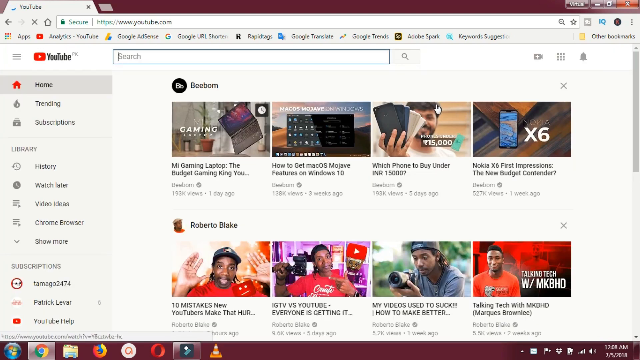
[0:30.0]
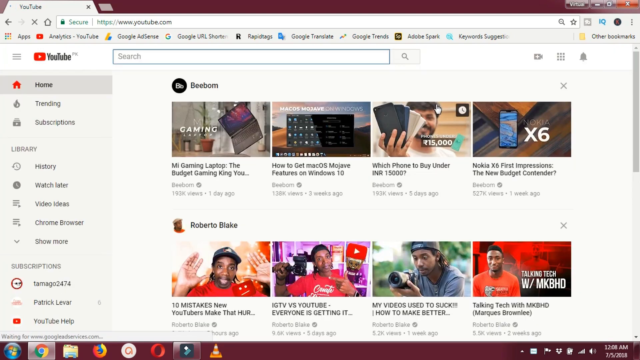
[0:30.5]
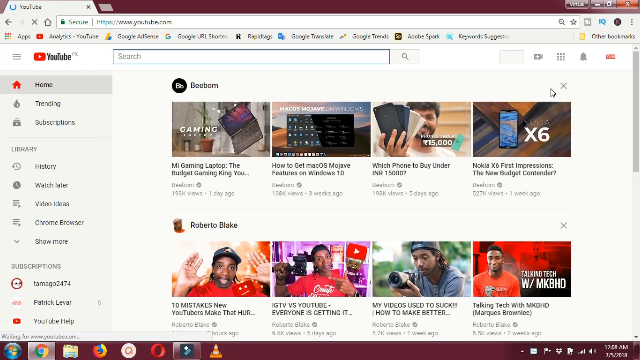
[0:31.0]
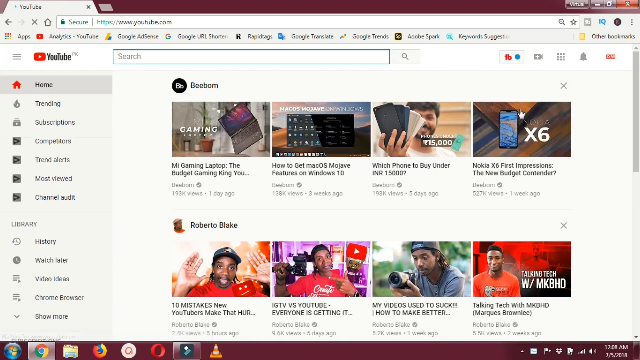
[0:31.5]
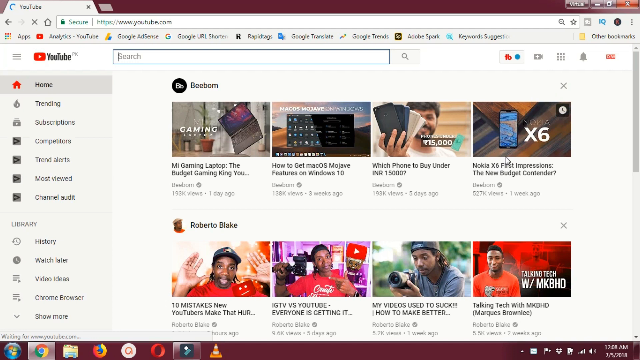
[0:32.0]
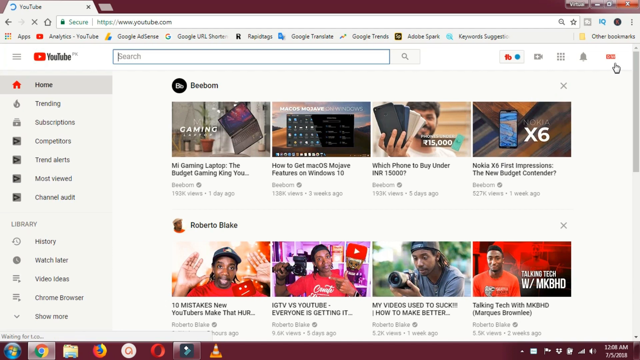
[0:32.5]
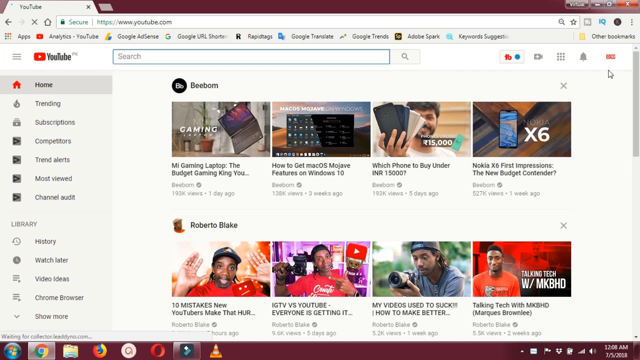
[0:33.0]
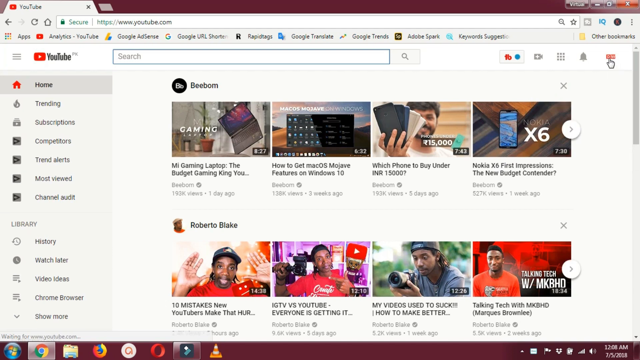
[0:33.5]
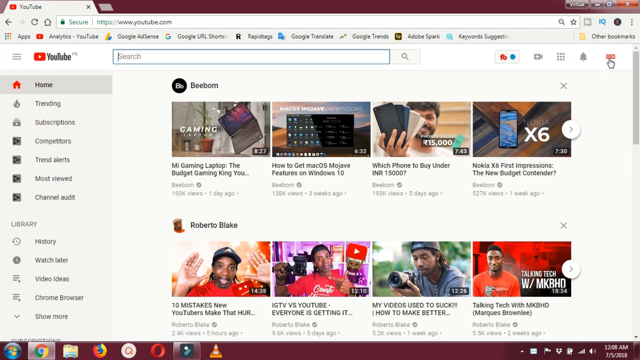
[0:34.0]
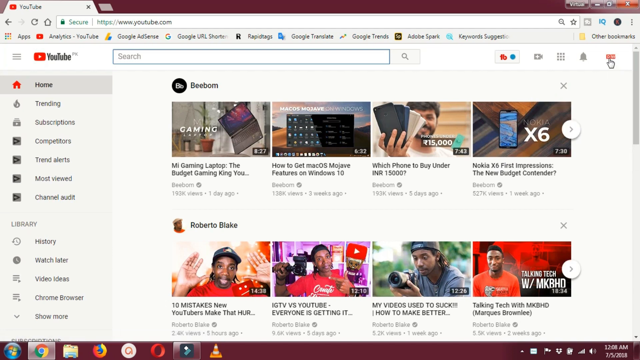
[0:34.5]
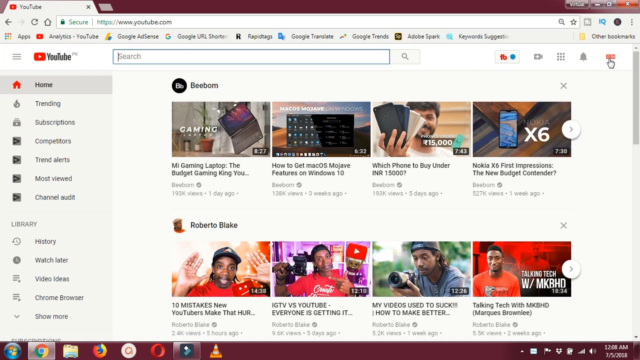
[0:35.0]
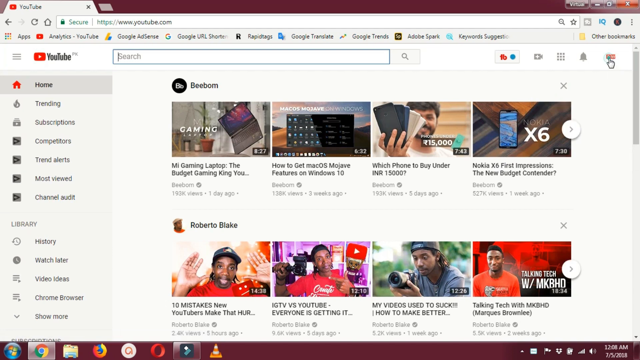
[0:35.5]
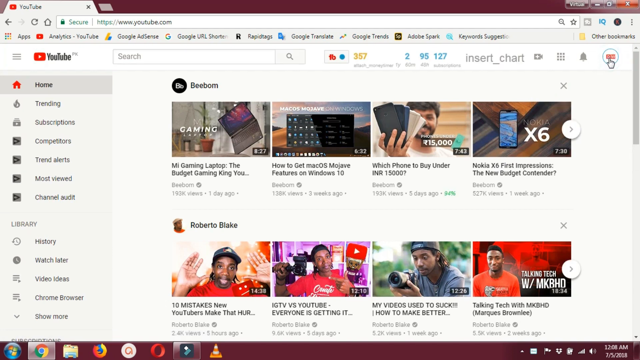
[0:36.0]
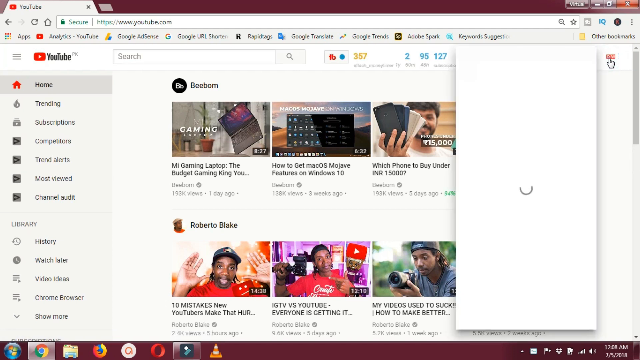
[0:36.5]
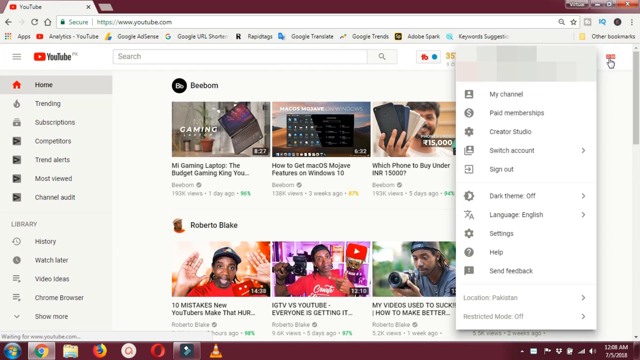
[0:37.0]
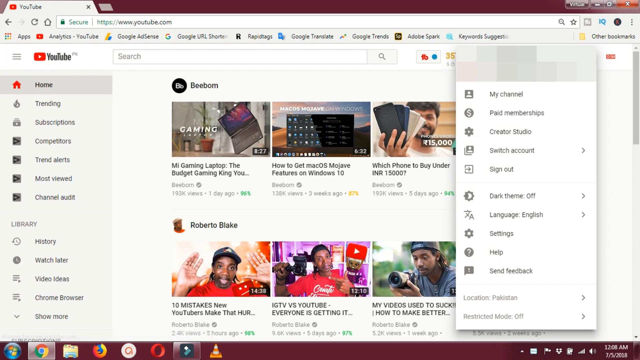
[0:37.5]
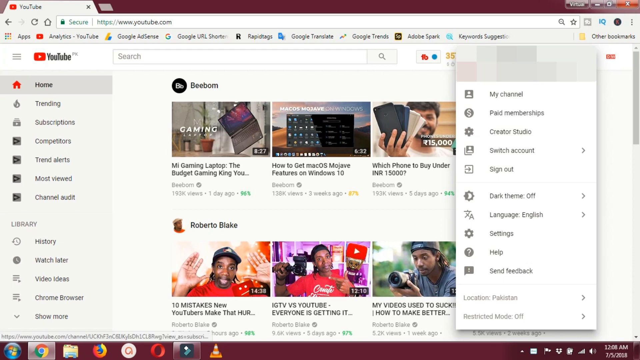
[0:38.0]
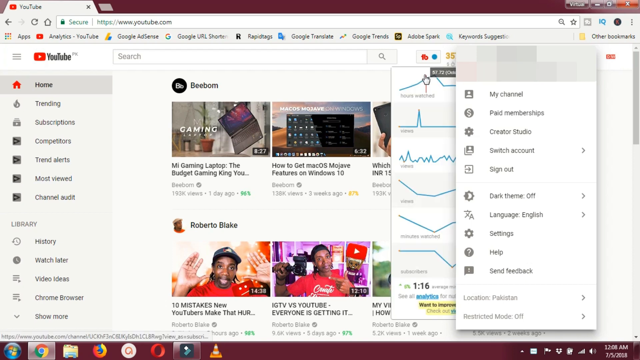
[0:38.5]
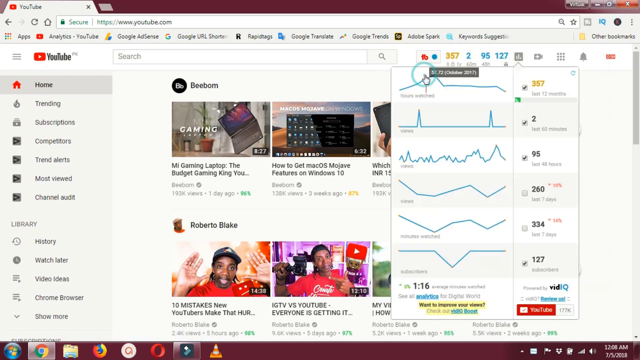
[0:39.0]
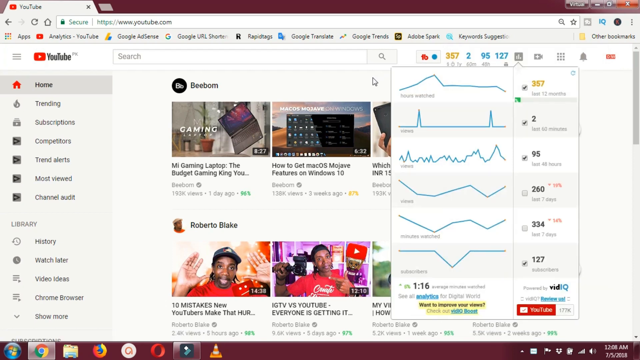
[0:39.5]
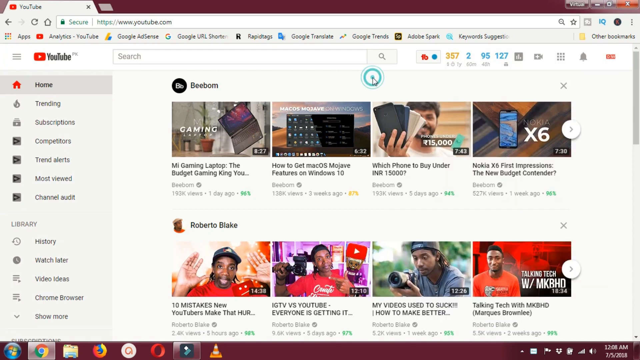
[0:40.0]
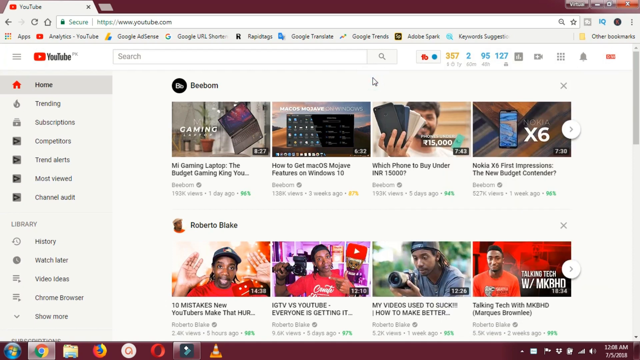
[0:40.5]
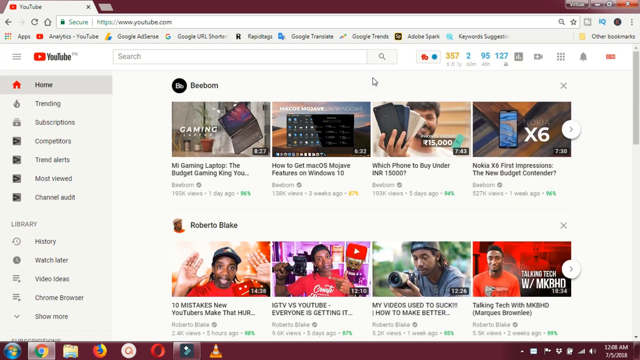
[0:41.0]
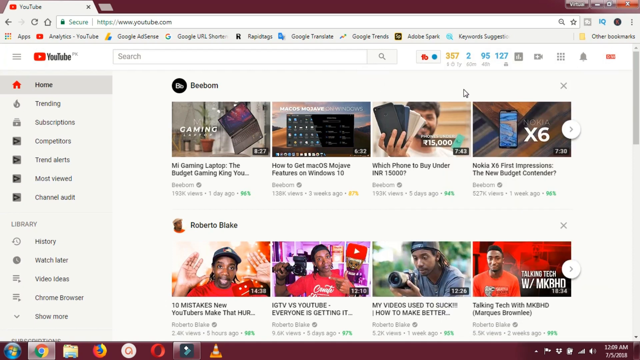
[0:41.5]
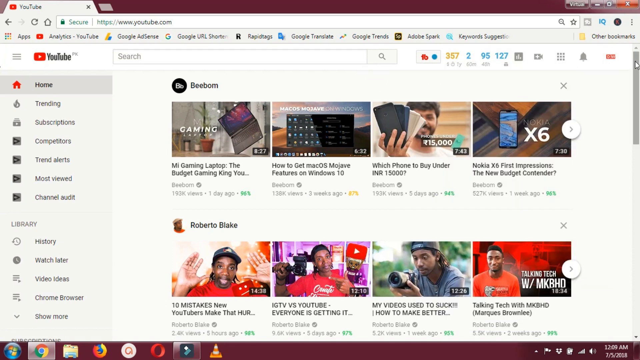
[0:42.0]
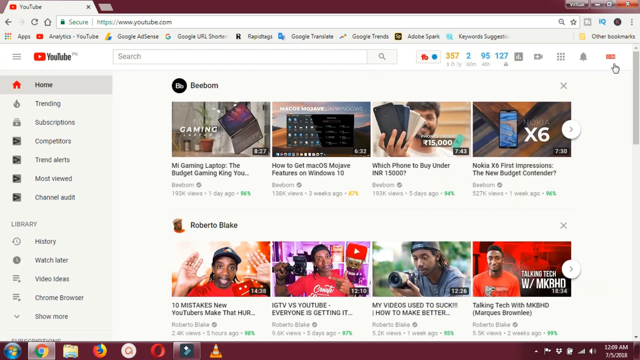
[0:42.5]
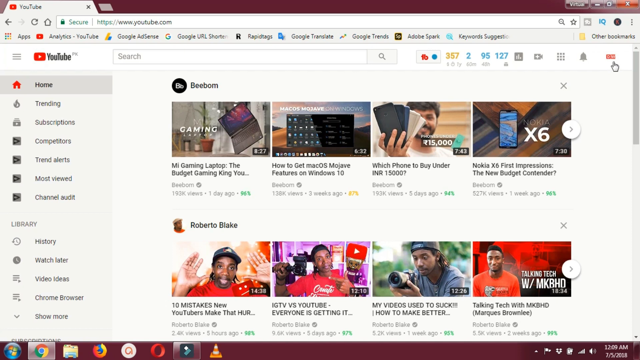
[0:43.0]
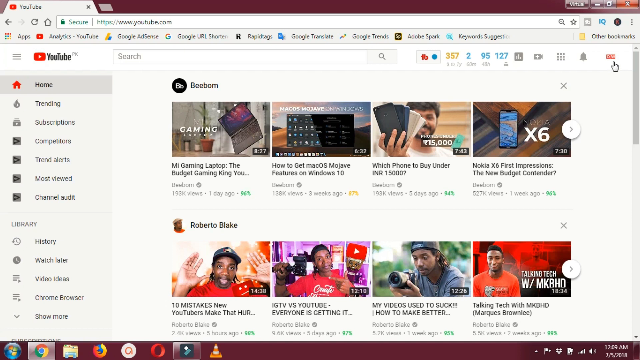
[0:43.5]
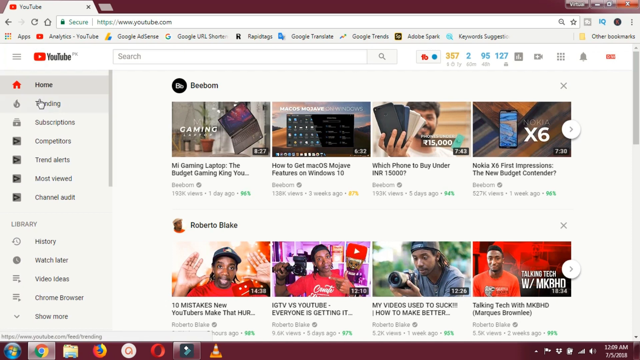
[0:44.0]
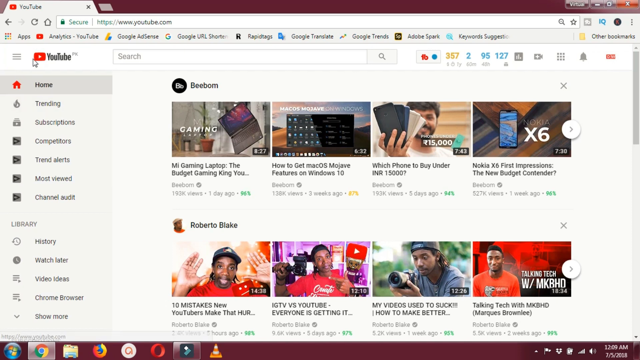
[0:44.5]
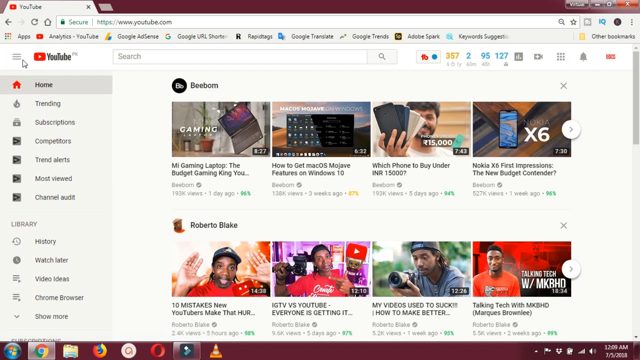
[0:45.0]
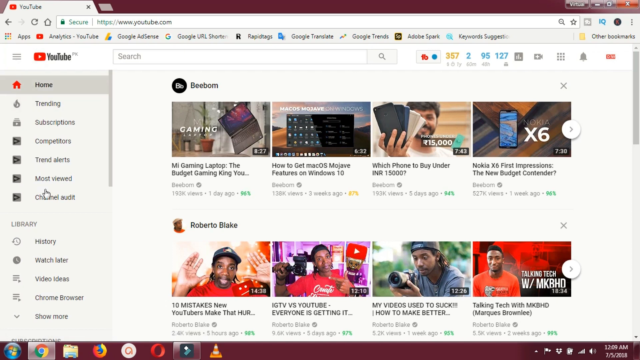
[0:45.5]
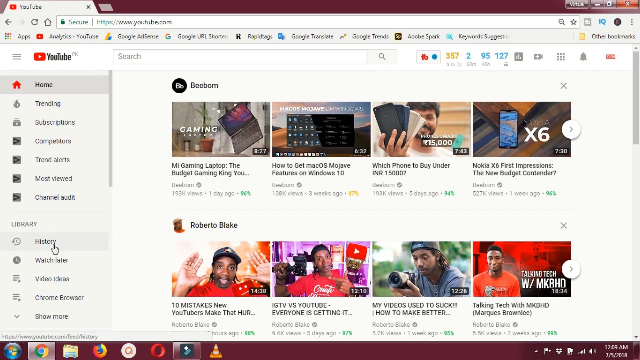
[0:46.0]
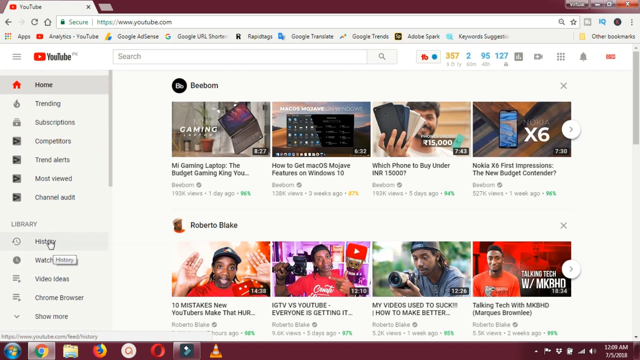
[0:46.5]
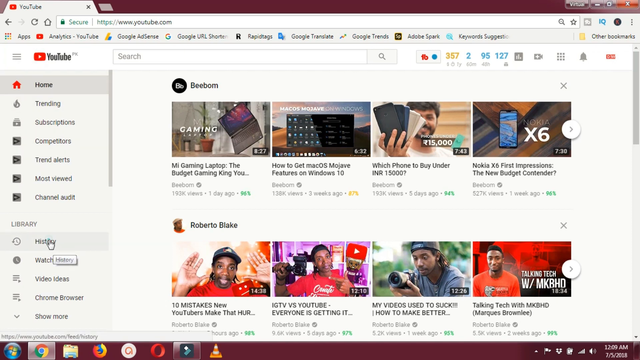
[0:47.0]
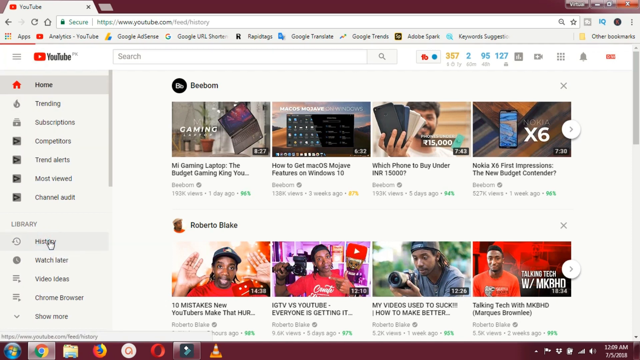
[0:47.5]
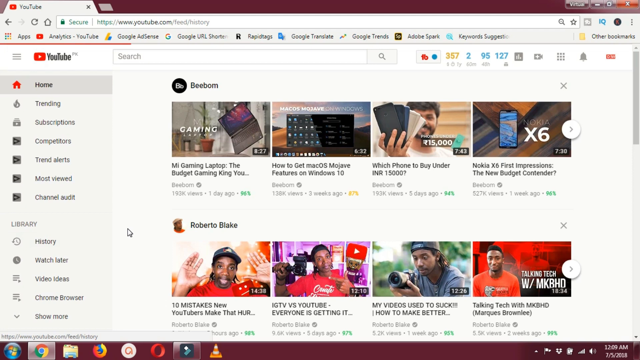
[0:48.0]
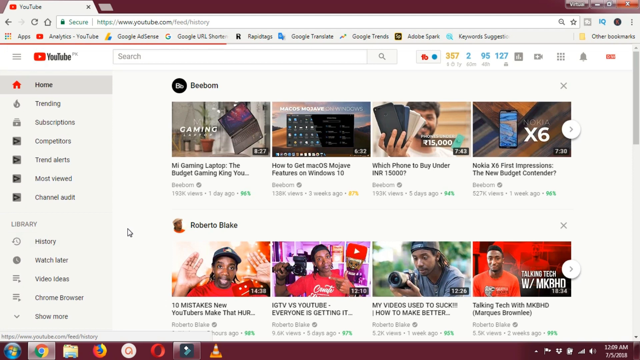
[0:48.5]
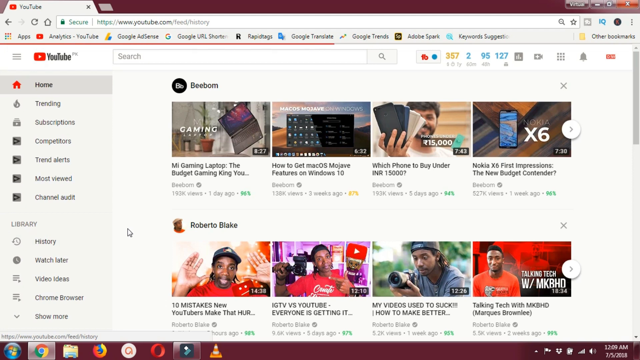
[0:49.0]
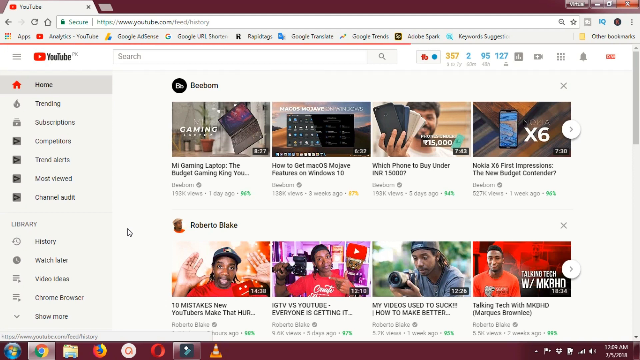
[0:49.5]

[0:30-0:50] A red button on the far right corner shows a diagram, a linear aligned graph. A history page then loads, showing the same videos that were displayed before: a video of a laptop, a video of a cell phone, a video of a man waving, and a video of a man holding a camera. This appears to be the navigating person's history, with entries including "OS Mojave features on Windows 10", "which iPhone to buy under a certain amount", "Nokia X6 first impression" and "10 mistakes new YouTube make that hurt". None of the videos are clicked or played.